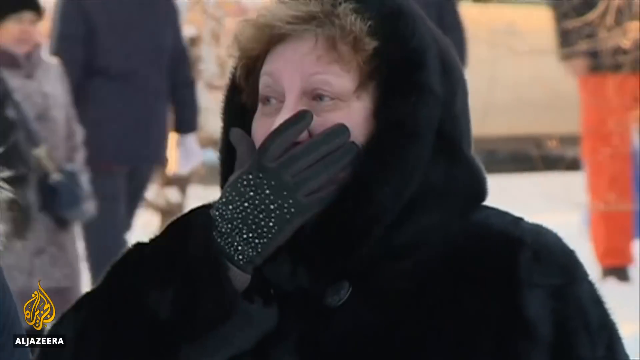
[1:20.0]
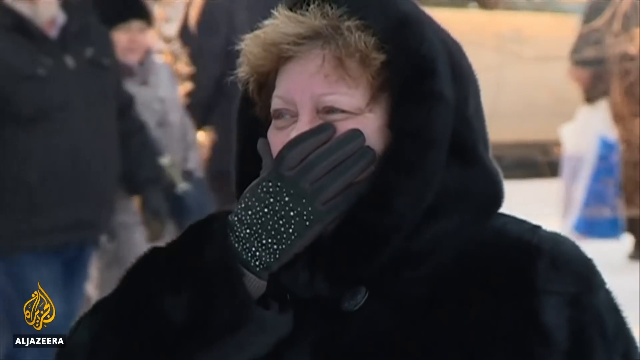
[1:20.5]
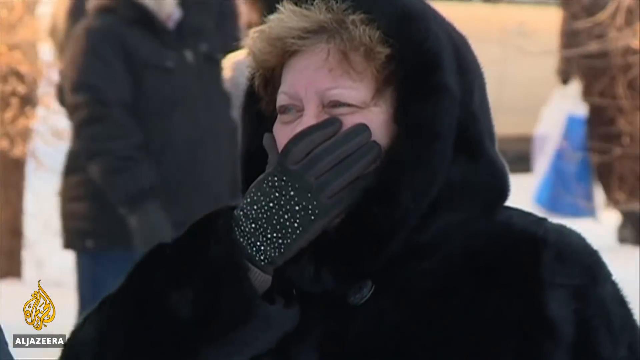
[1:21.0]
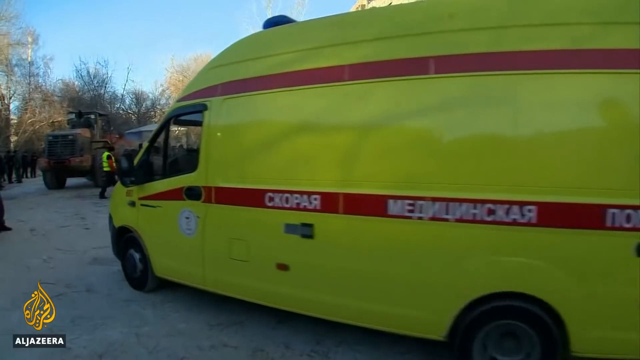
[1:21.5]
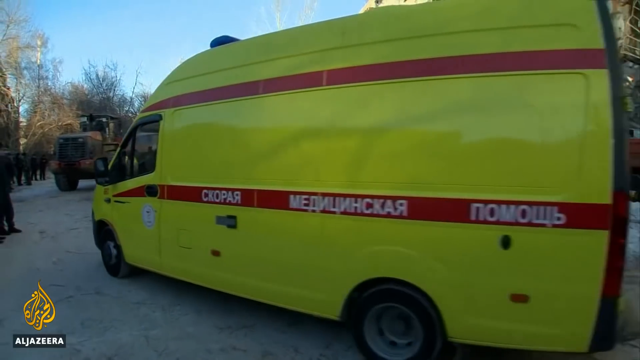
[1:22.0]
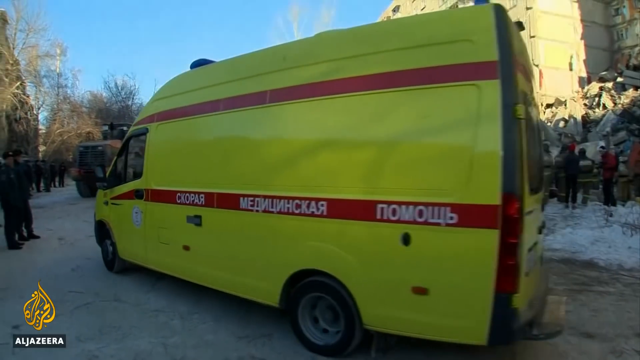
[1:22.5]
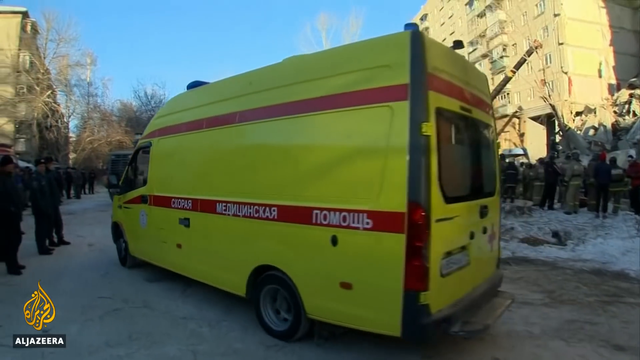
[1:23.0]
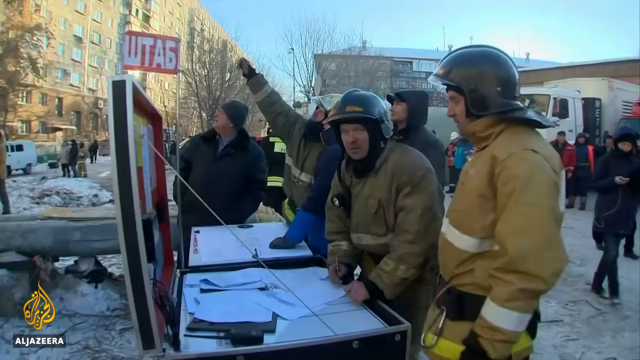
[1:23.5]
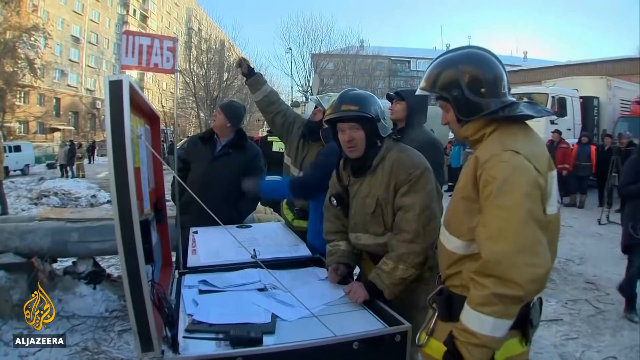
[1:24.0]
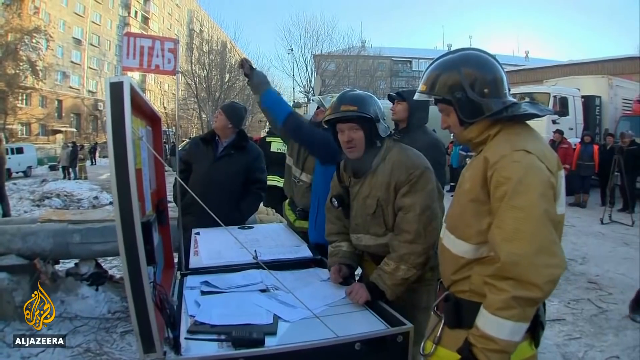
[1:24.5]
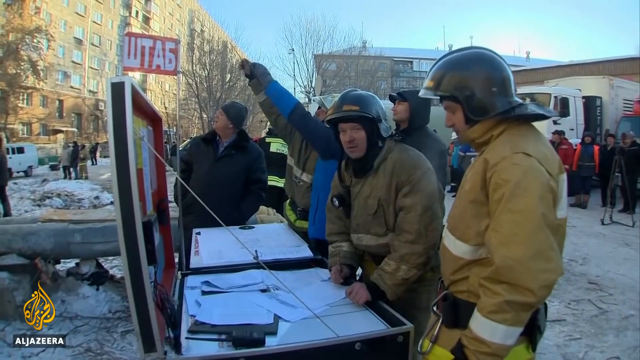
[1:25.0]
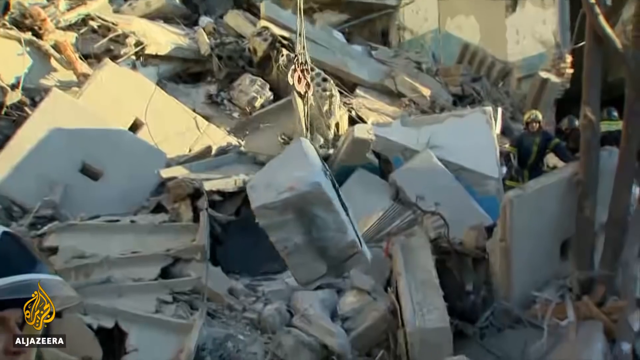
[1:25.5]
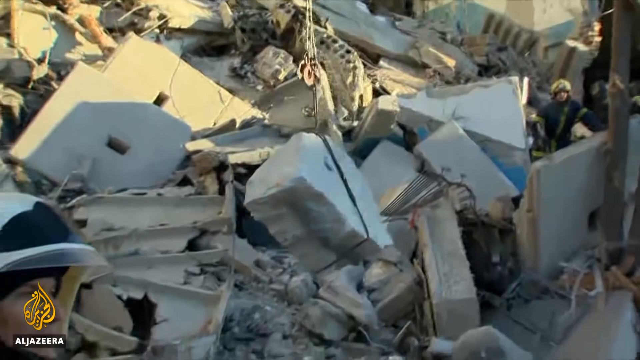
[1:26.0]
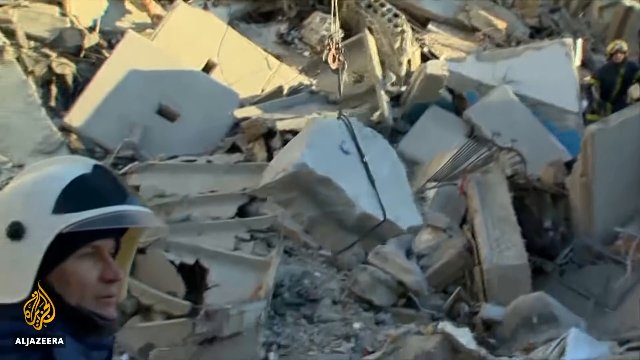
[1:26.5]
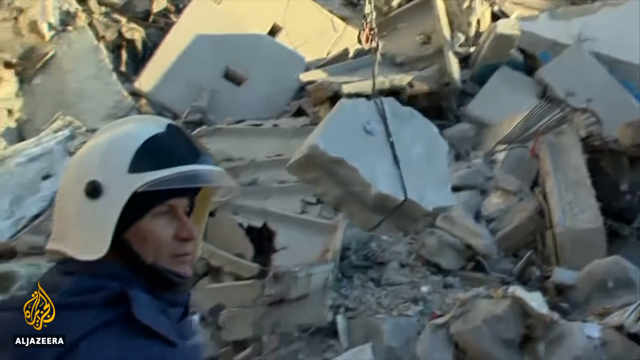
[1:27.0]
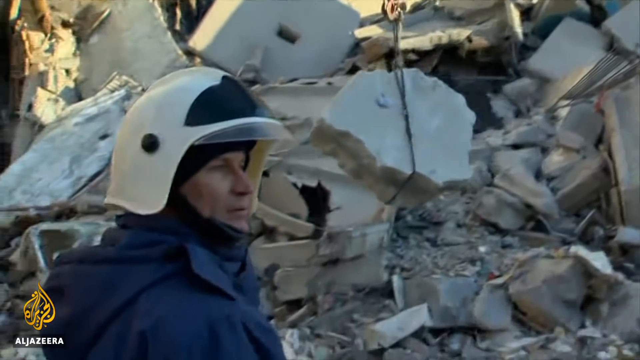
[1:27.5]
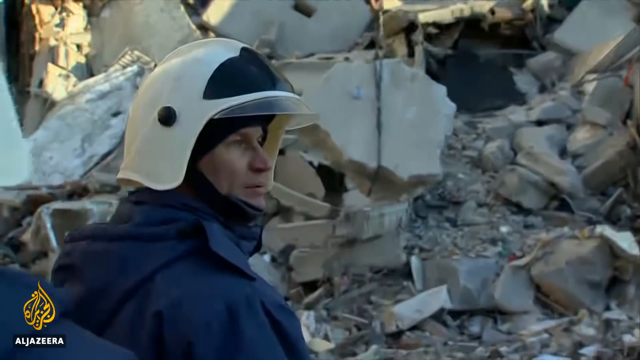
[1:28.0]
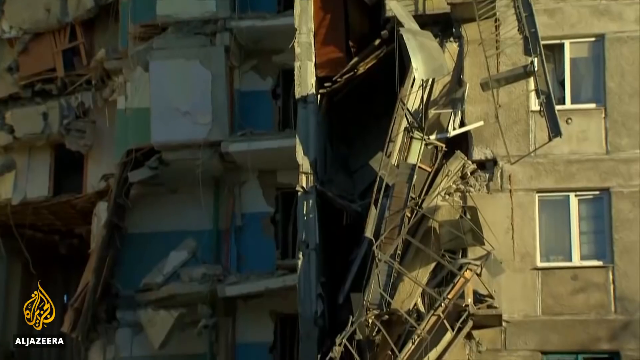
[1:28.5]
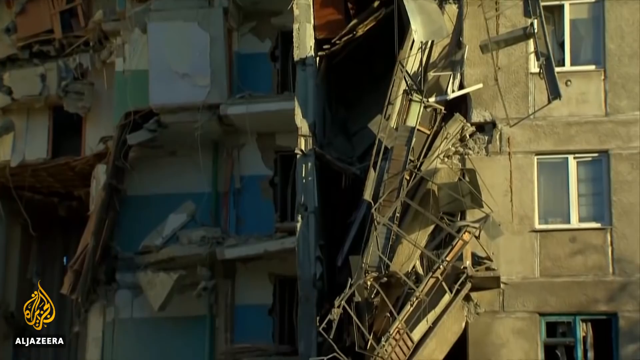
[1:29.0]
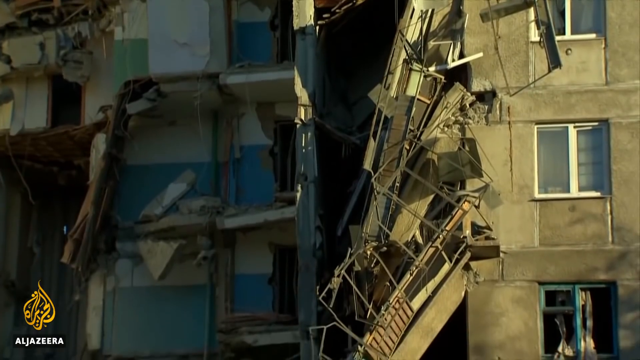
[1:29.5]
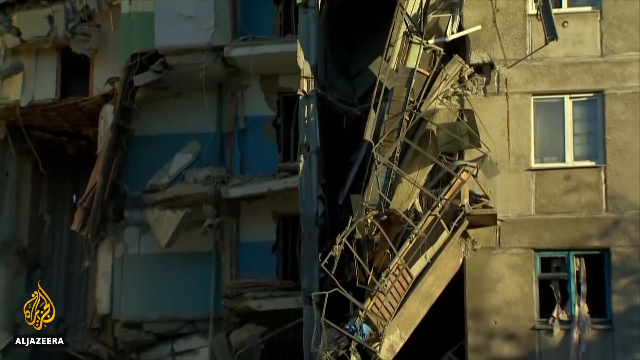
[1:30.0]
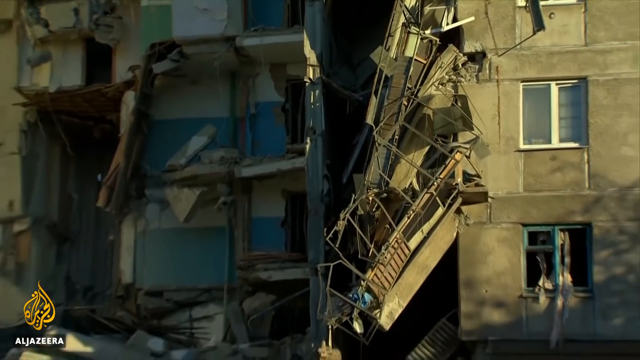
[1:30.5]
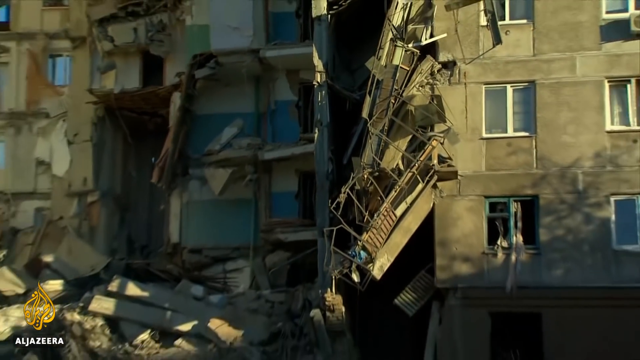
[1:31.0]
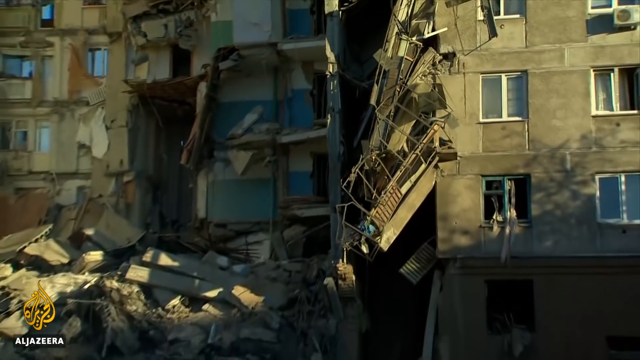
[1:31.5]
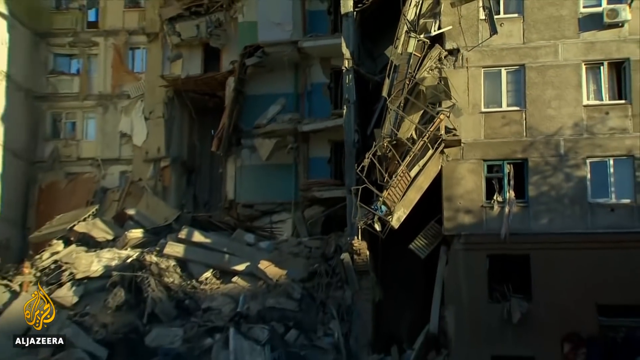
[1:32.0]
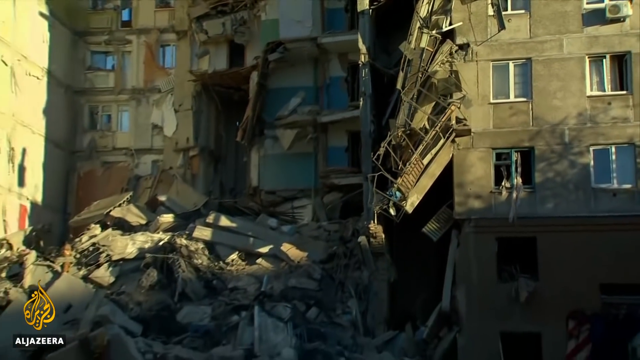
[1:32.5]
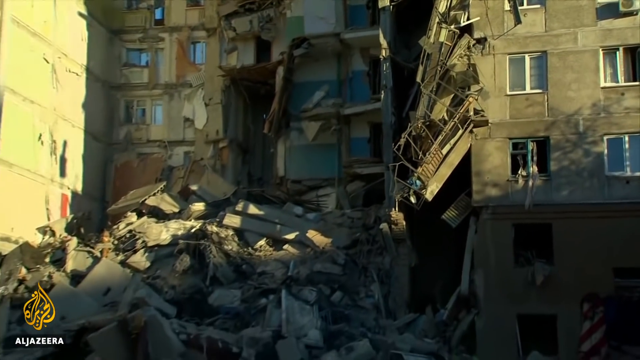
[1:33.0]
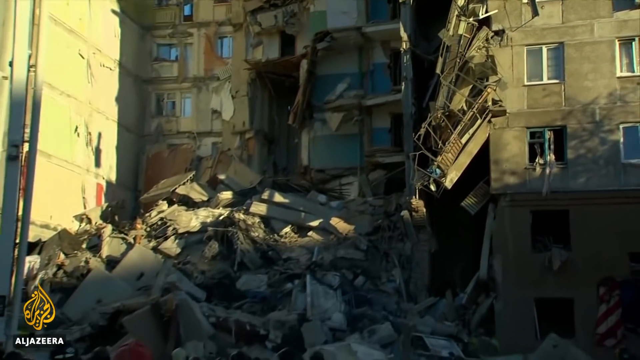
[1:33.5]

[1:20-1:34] A lady appears briefly; she seems very stressed and may be one of the survivors. The video returns to the buildings where the explosion happened. Workers are trying to remove and shift big rocks. Rescuers and firefighters are still at the scene, and an ambulance moves around.